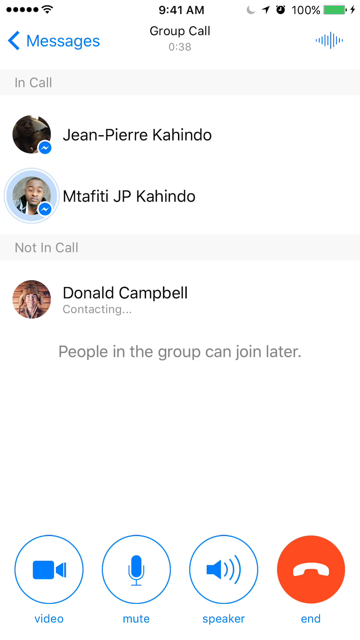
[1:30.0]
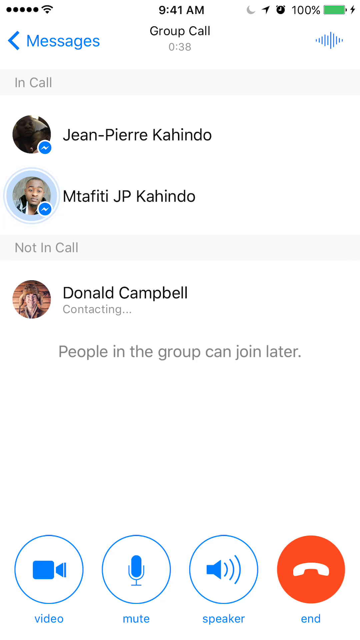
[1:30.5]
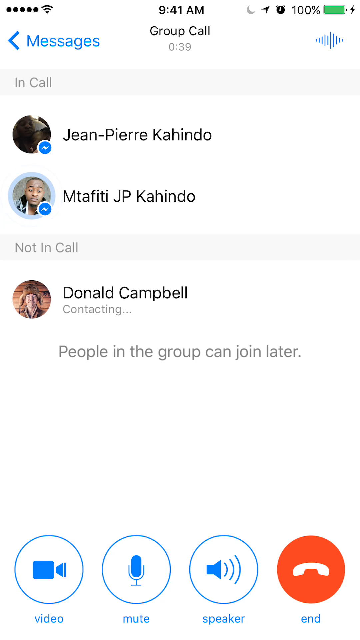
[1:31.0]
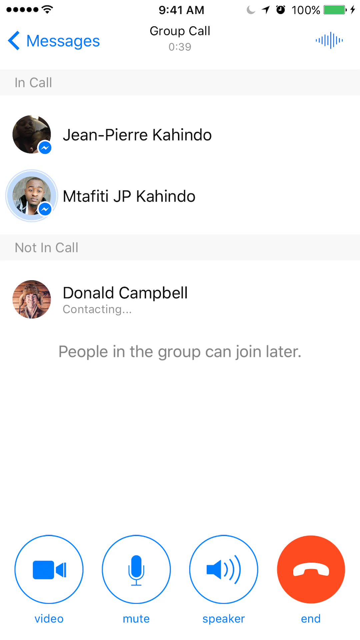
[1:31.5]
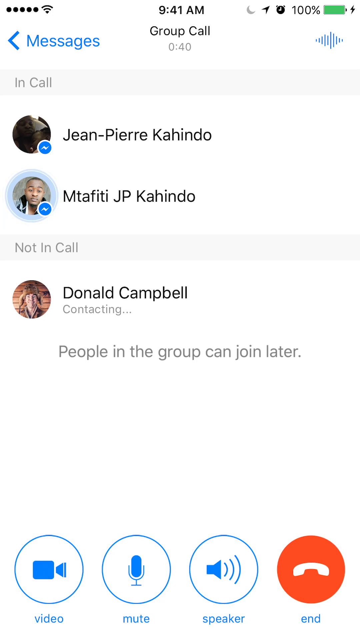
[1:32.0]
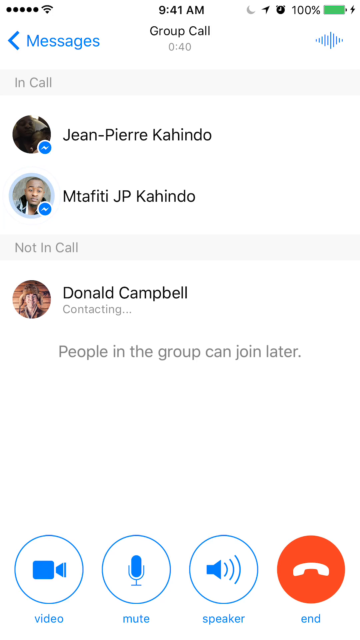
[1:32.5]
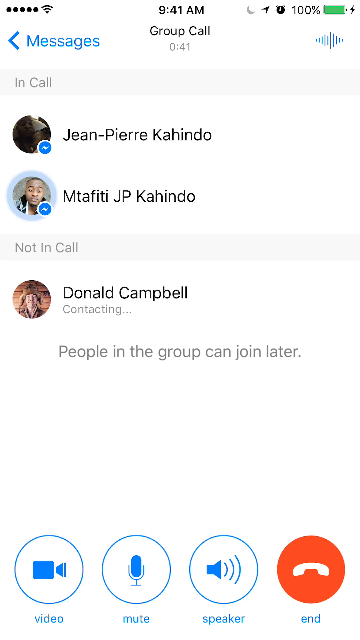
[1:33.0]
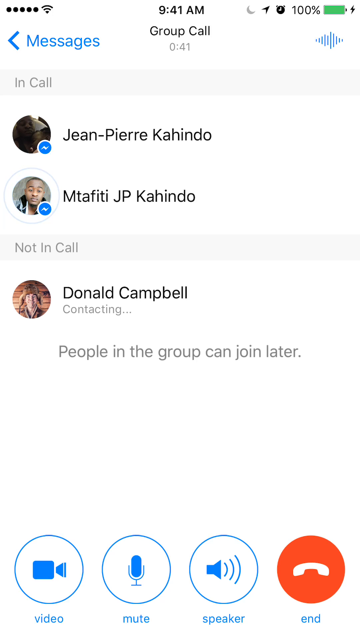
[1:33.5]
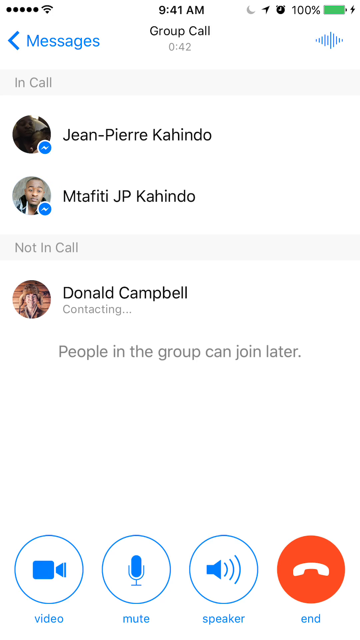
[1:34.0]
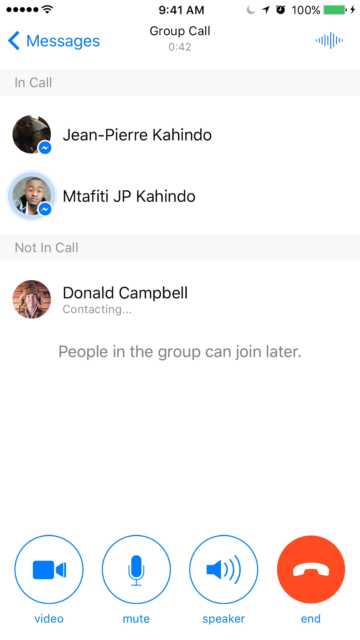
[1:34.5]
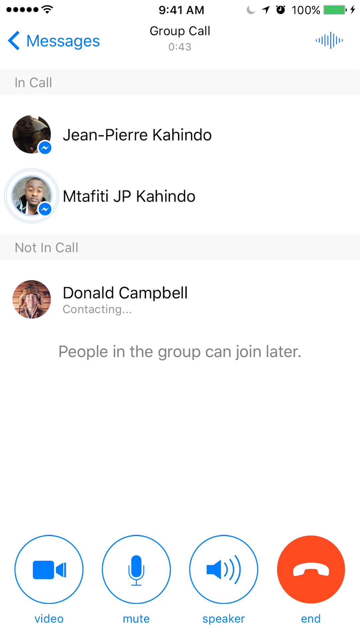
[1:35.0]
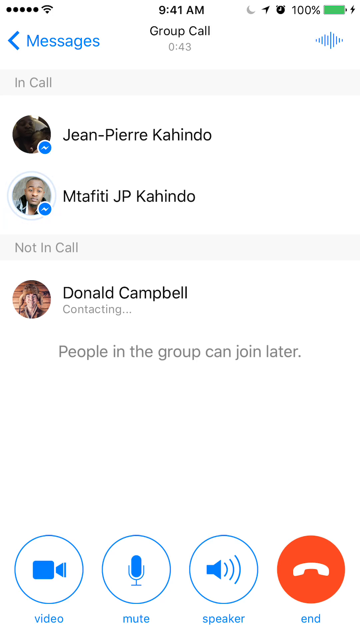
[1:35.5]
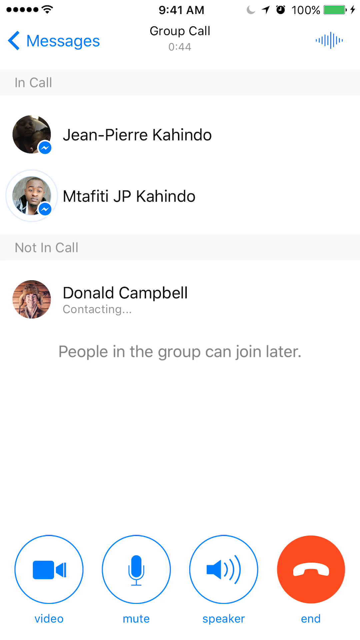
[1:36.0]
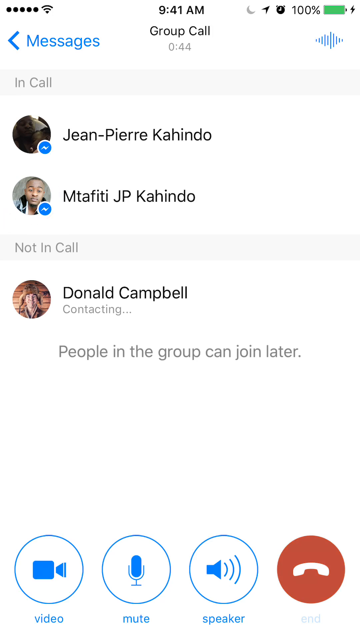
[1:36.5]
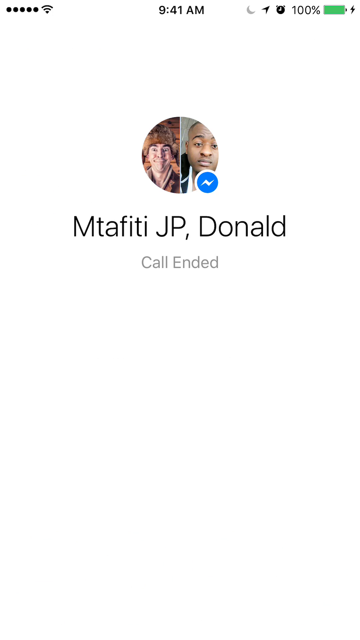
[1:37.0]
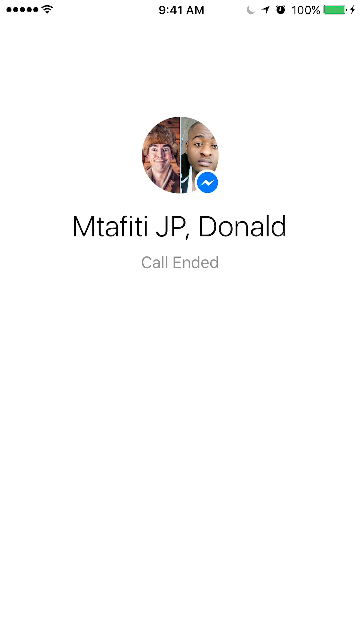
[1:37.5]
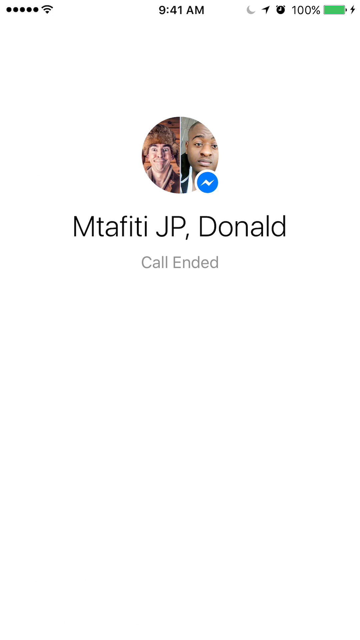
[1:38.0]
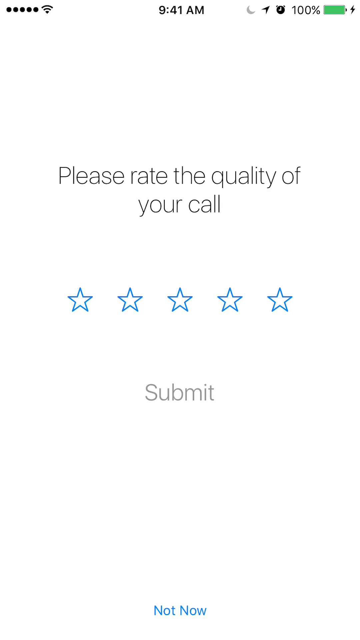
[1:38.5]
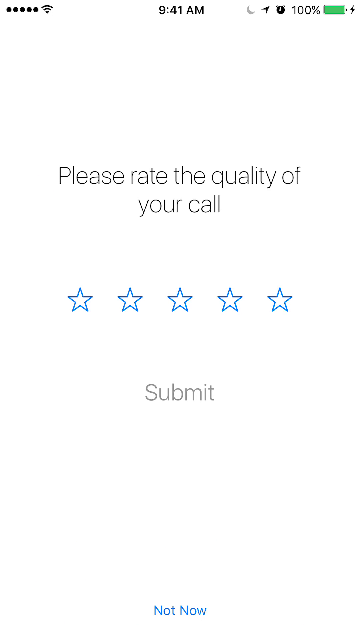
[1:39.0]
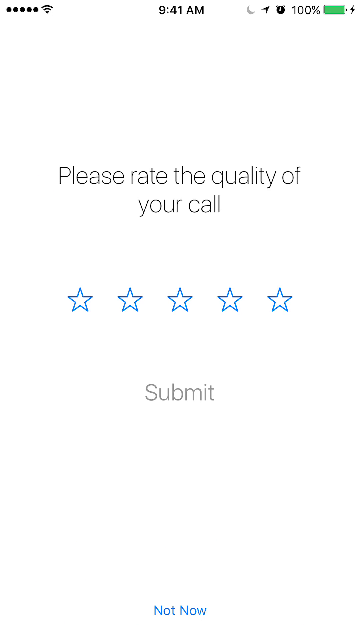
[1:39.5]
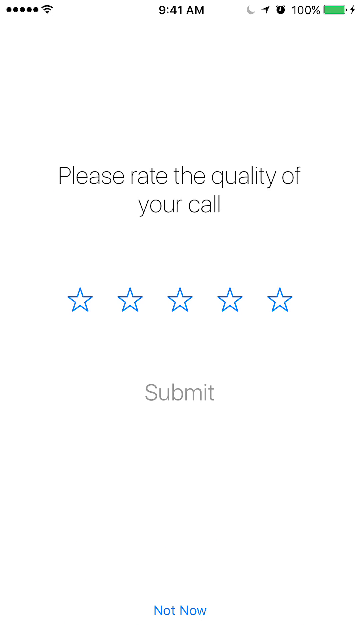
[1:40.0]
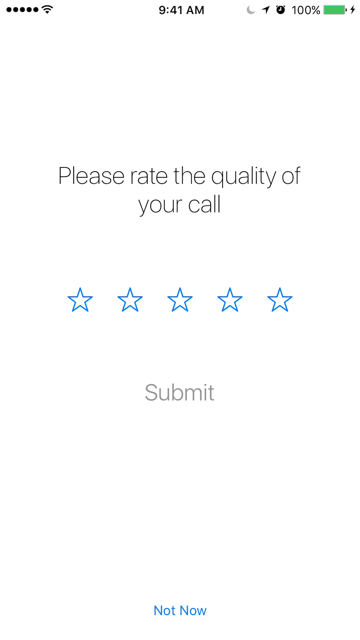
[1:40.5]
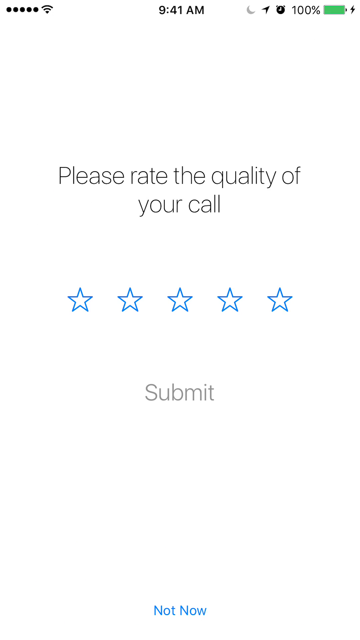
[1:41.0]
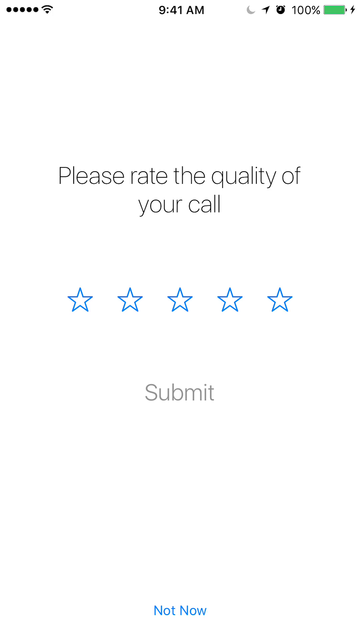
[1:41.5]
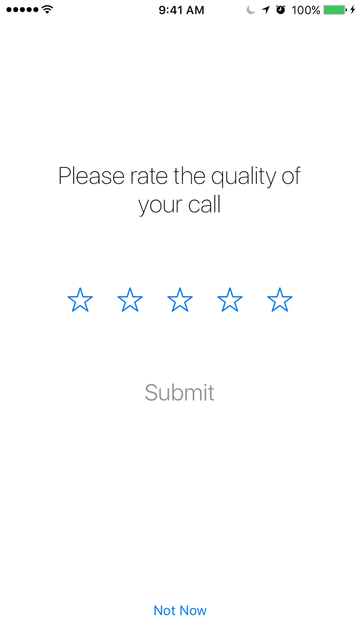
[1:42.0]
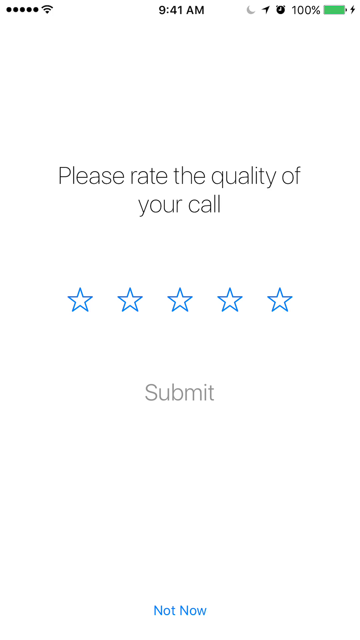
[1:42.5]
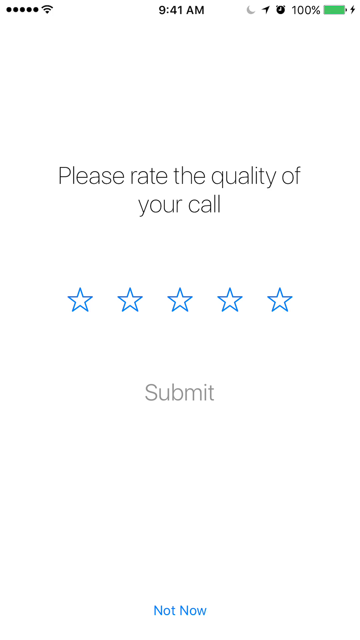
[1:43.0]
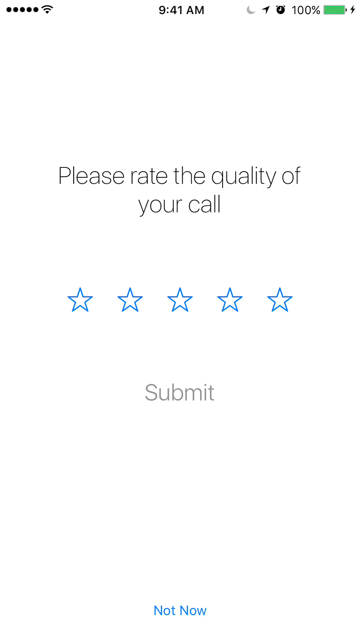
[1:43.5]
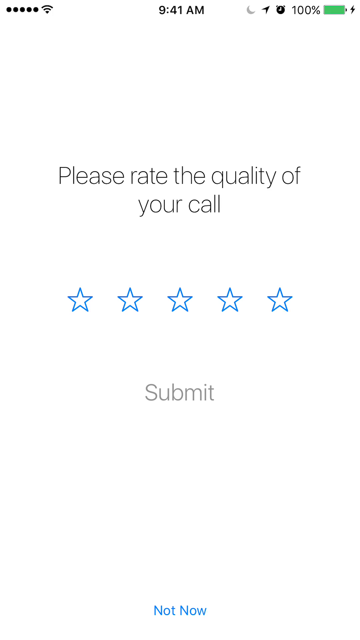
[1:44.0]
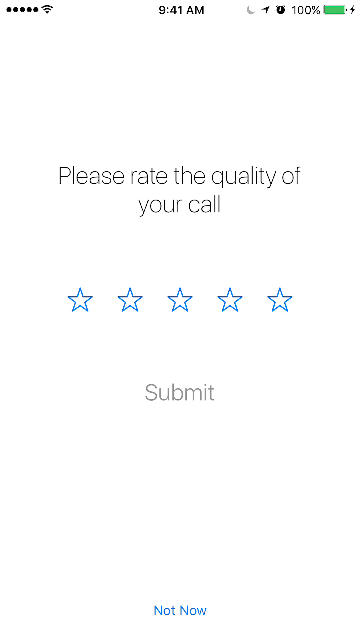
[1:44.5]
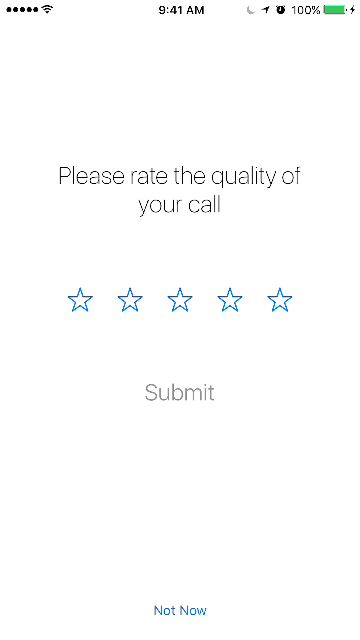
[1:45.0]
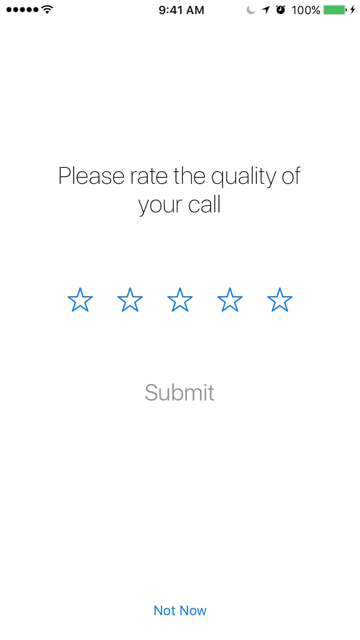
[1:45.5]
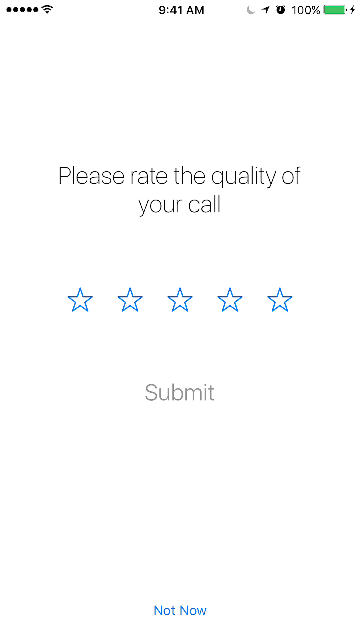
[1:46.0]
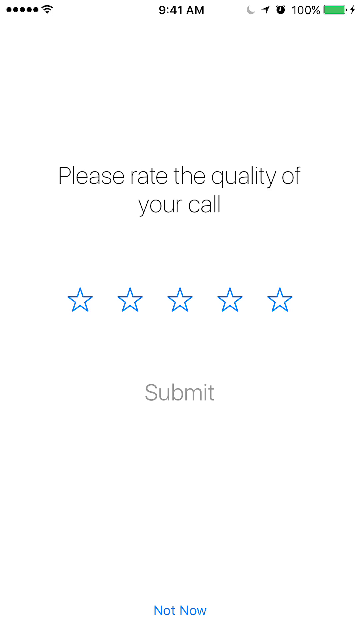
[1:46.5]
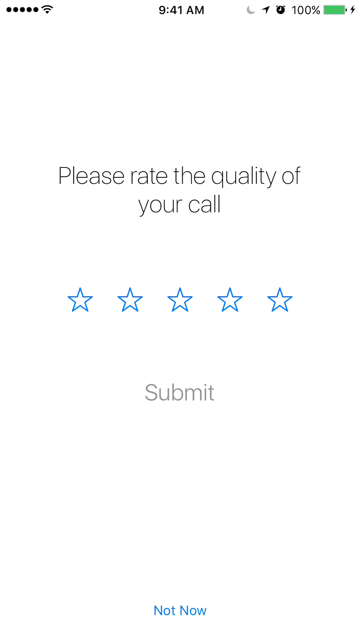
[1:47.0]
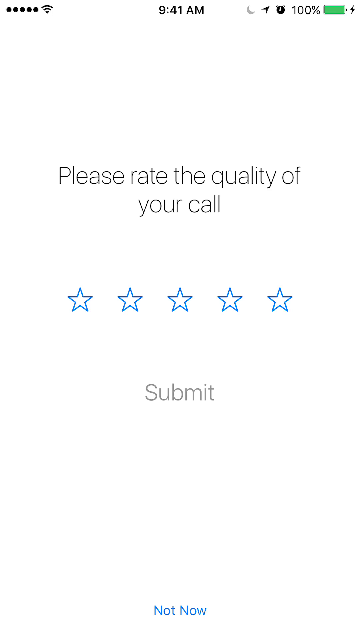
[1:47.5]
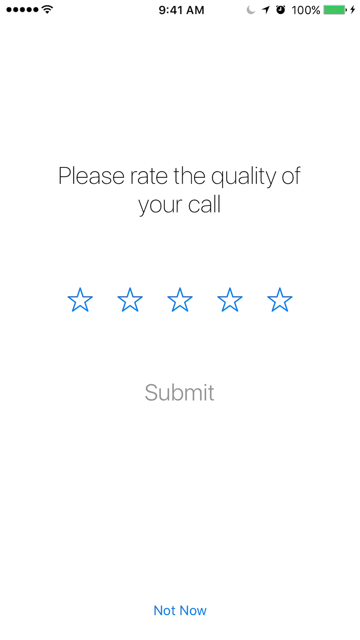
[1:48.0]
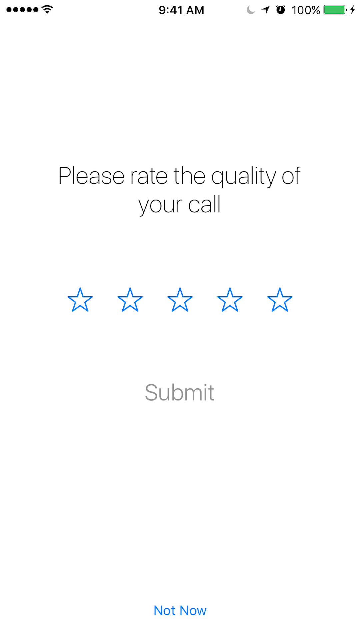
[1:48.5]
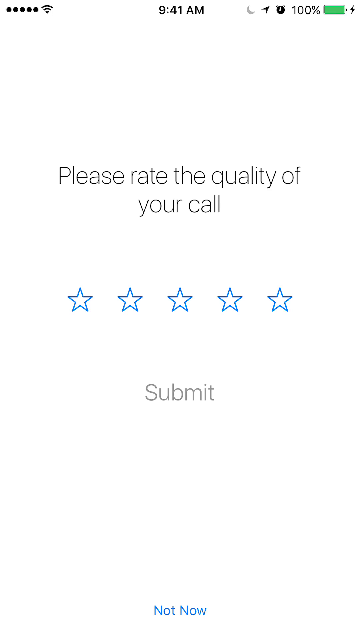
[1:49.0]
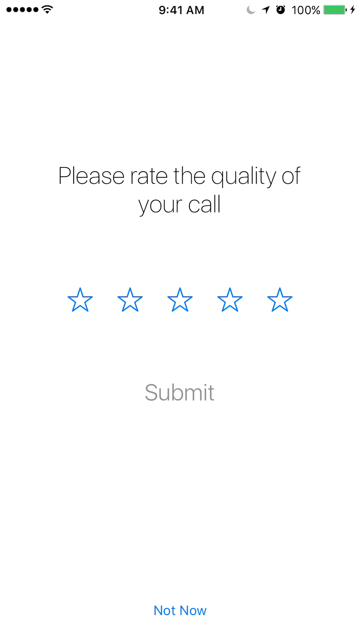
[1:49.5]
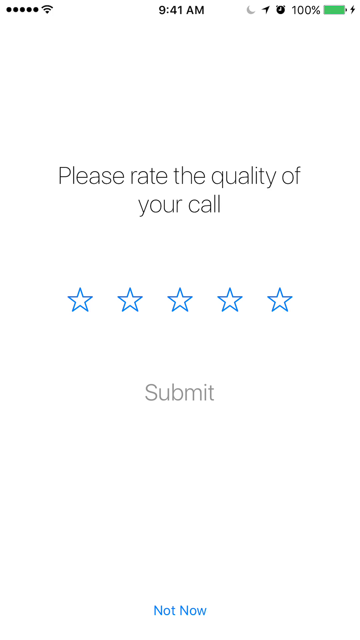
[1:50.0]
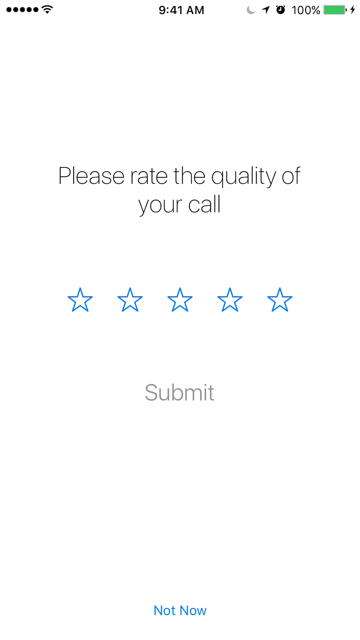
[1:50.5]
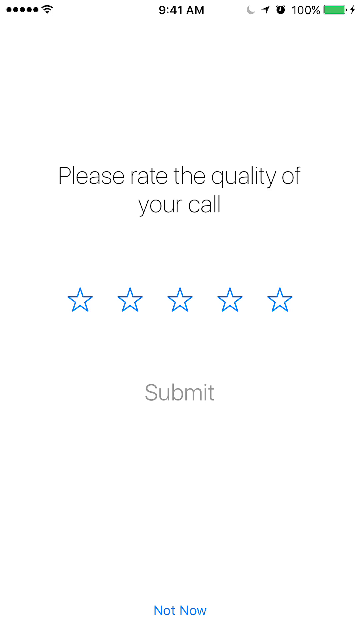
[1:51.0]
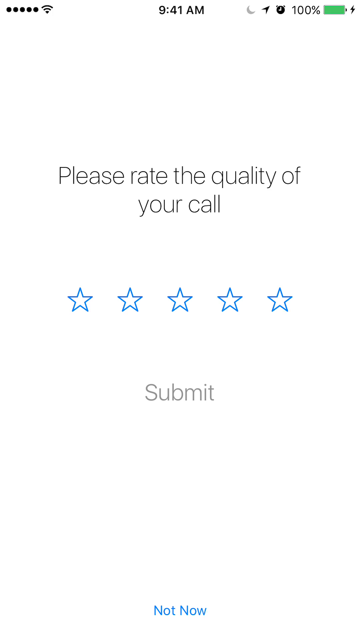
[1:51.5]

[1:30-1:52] The group call continues in the Messenger app on a cell phone, with full signal in the upper left corner, 100% battery in the upper right, and 9:41 AM in the center. Beneath the time, "group call" shows the call has been running for 38 seconds. Under "in call" are two names: Jean-Pierre Cahindo first, then Mitafiti JP Cahindo. Below, "not in call" shows Donald Campbell "contacting", followed by "people in the group can join later". At the very bottom are a camera symbol on the left, a microphone symbol, a sound volume symbol and a hang-up button. A blue aura surrounds Mitafiti JP Cahindo's profile image because he is talking. The screen then changes to a white screen reading "Mitafiti JP and Donald" and "call ended". Next comes a screen reading "please rate the quality of your call", with five unfilled stars, "submit" underneath, and "not now" at the very bottom. The view stays on this screen for a while, and the stars are outlined in blue.